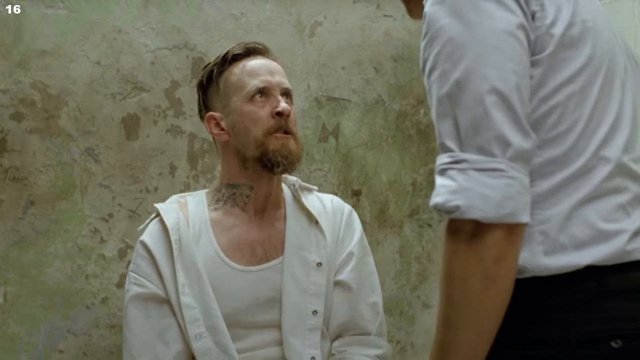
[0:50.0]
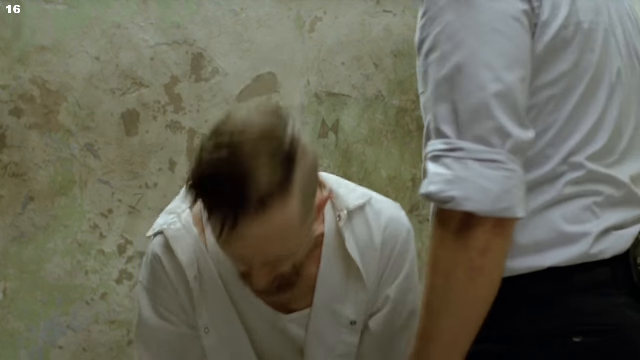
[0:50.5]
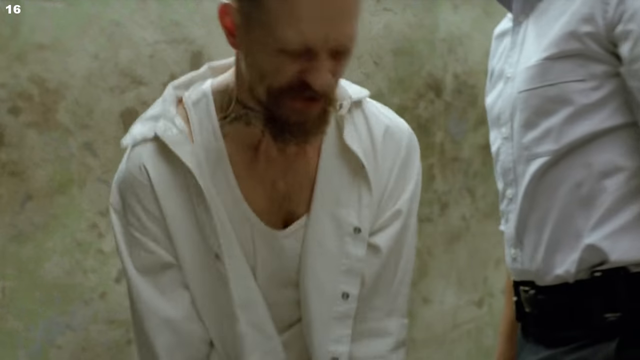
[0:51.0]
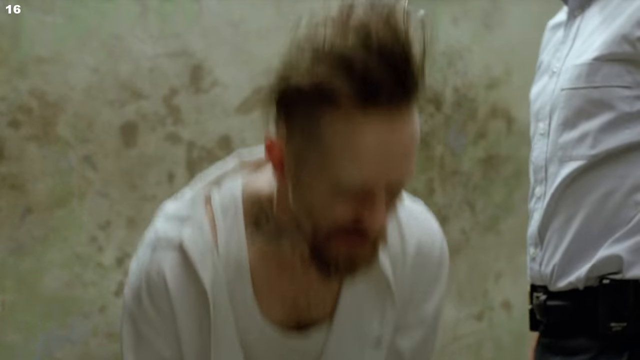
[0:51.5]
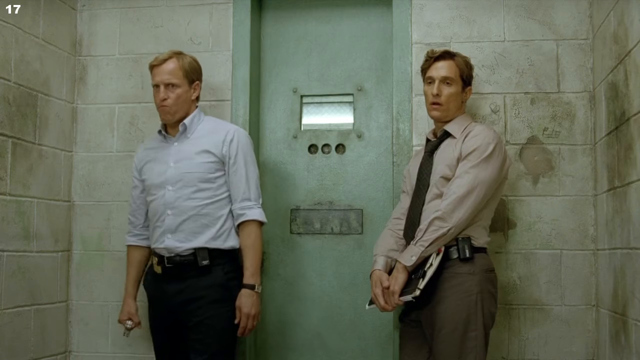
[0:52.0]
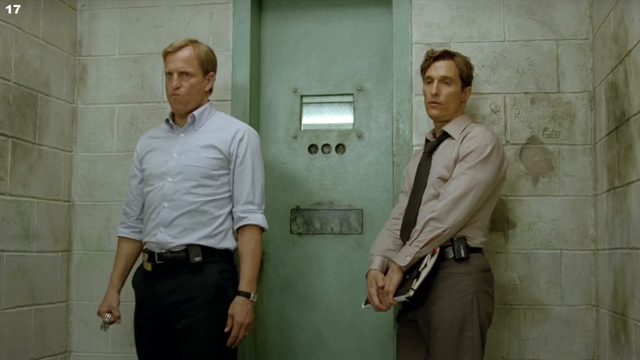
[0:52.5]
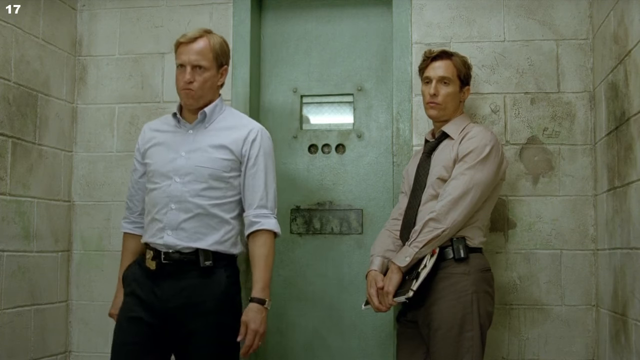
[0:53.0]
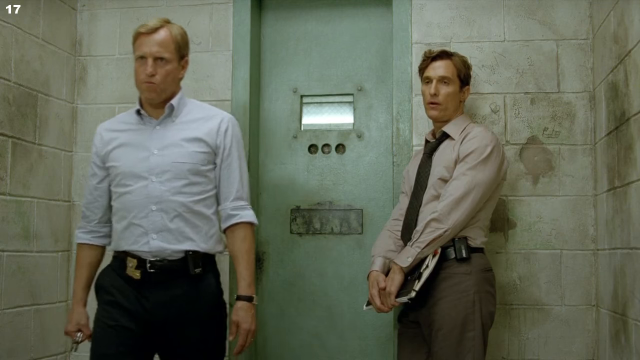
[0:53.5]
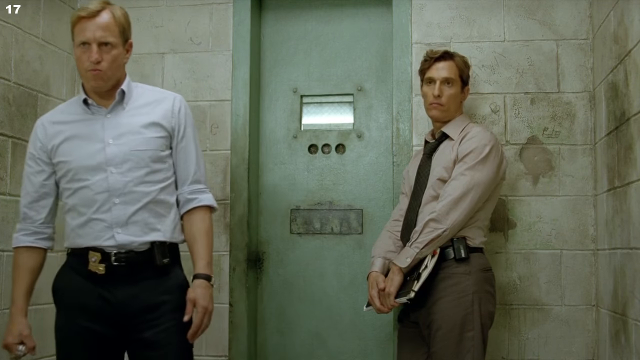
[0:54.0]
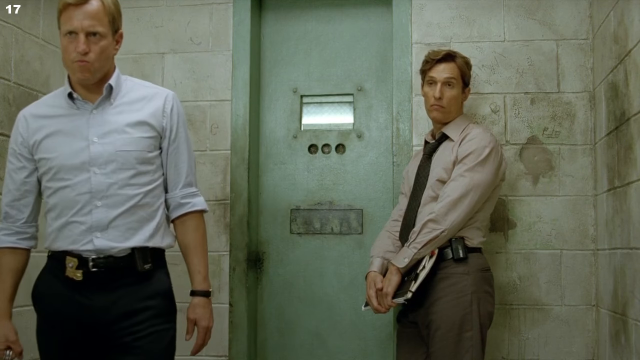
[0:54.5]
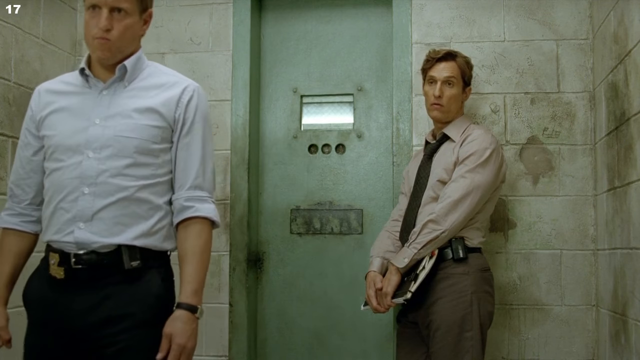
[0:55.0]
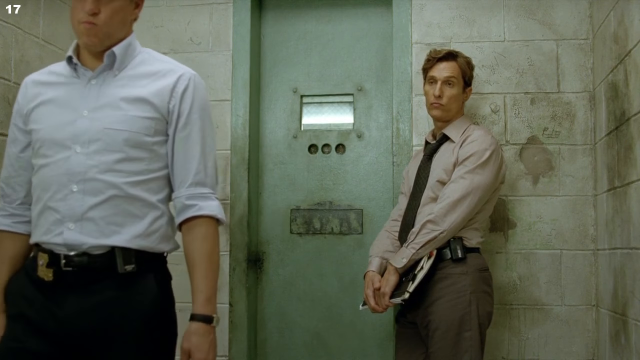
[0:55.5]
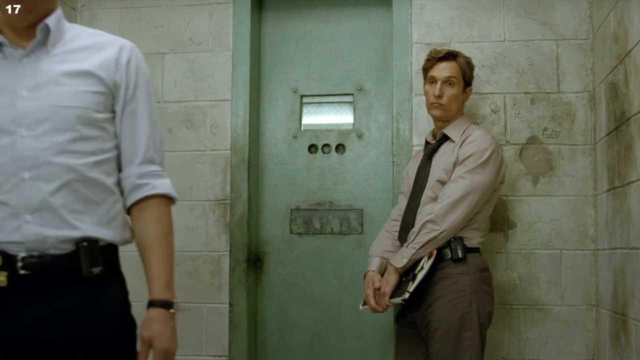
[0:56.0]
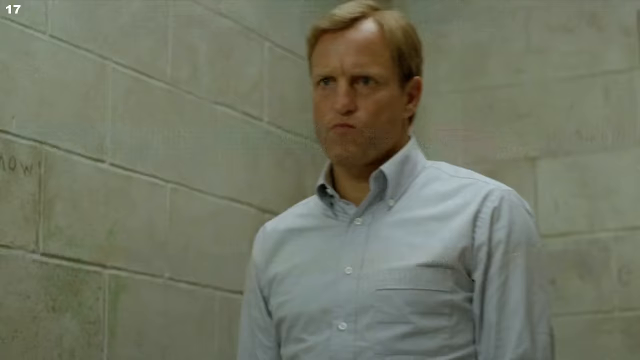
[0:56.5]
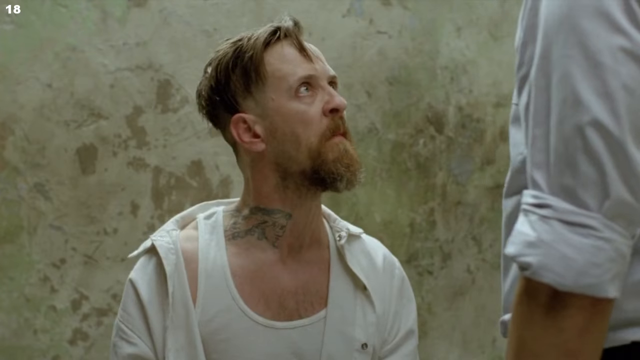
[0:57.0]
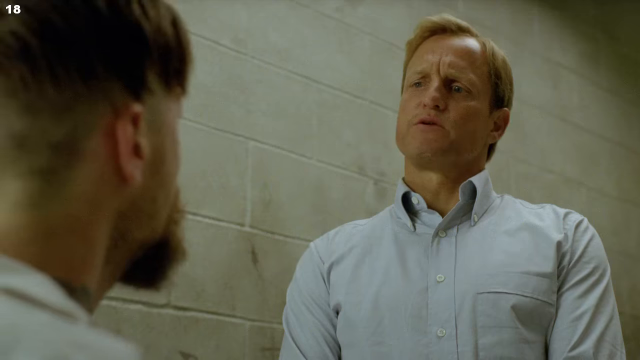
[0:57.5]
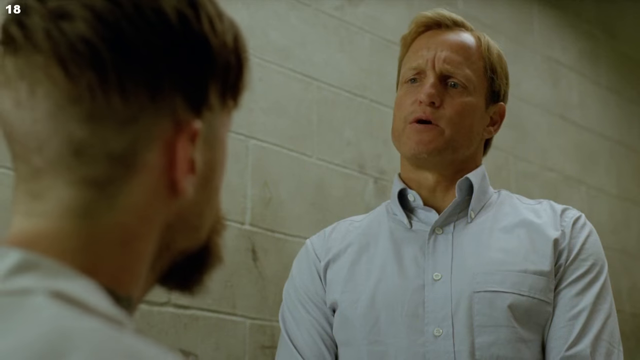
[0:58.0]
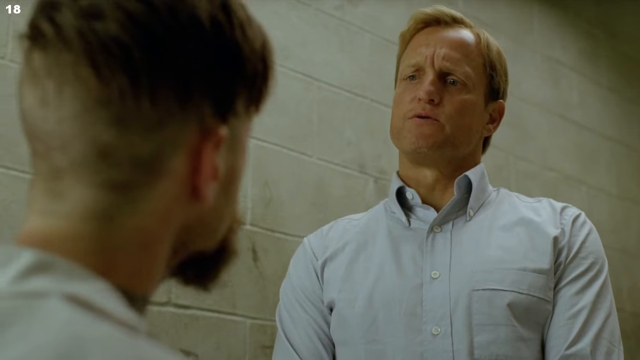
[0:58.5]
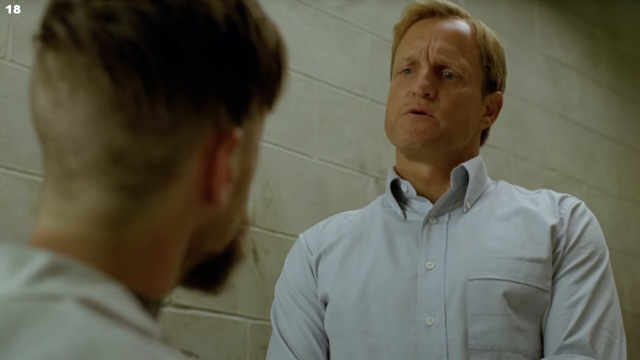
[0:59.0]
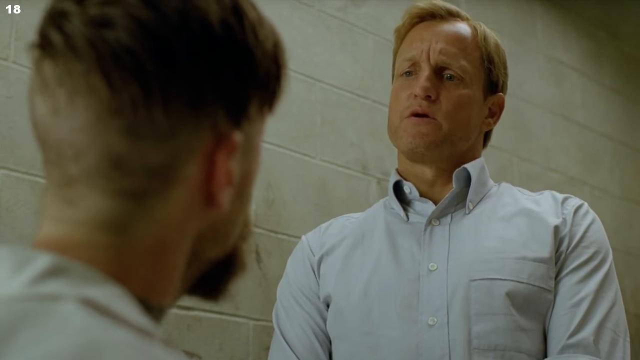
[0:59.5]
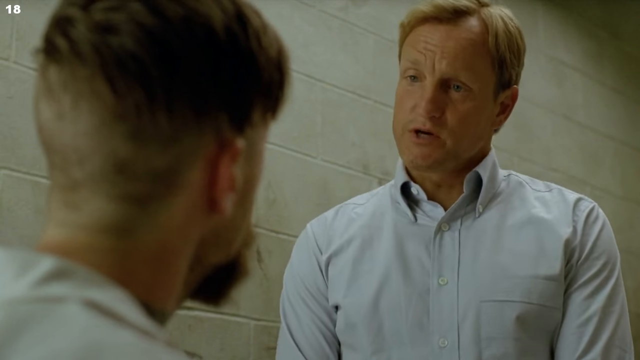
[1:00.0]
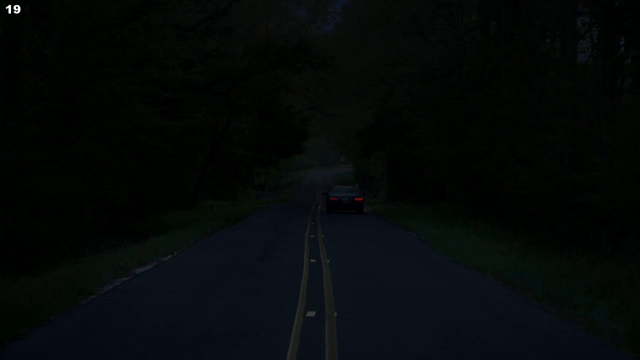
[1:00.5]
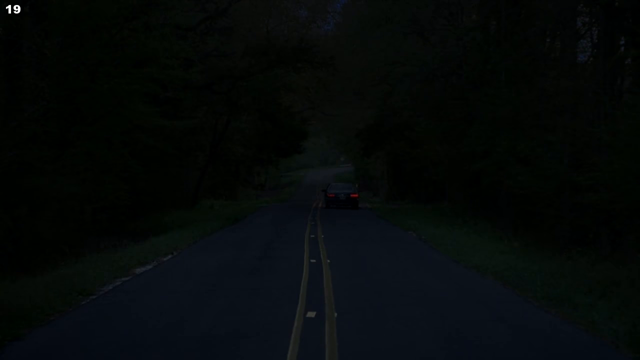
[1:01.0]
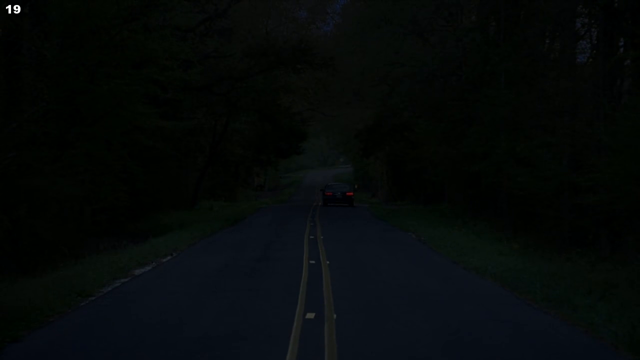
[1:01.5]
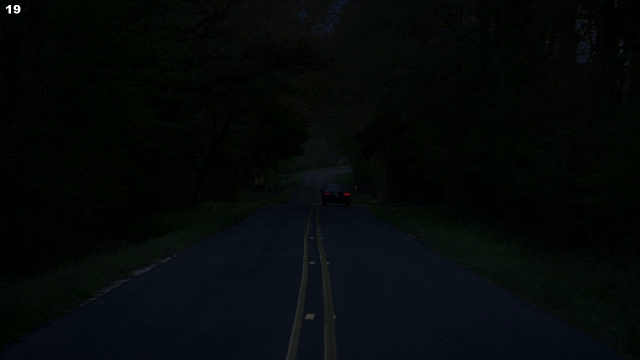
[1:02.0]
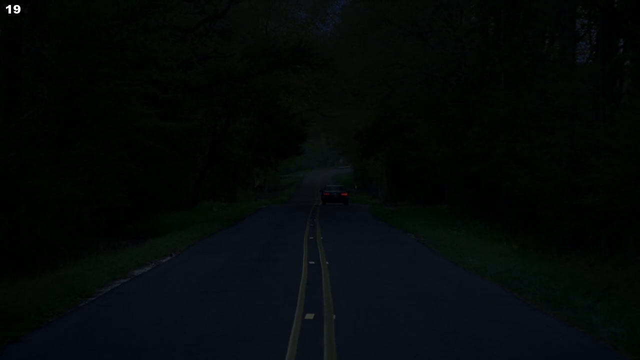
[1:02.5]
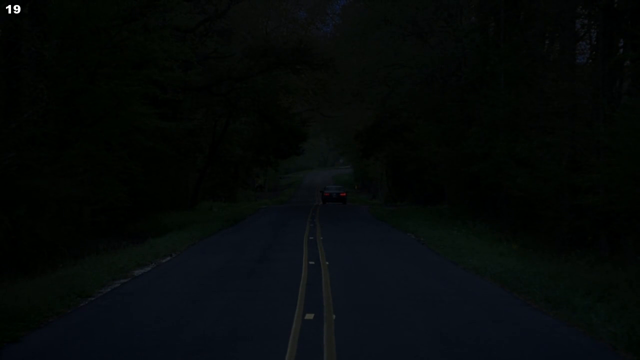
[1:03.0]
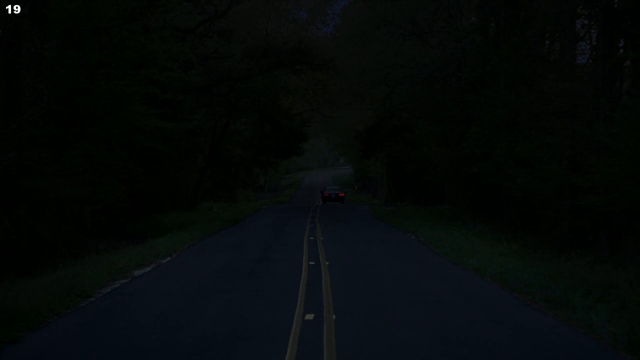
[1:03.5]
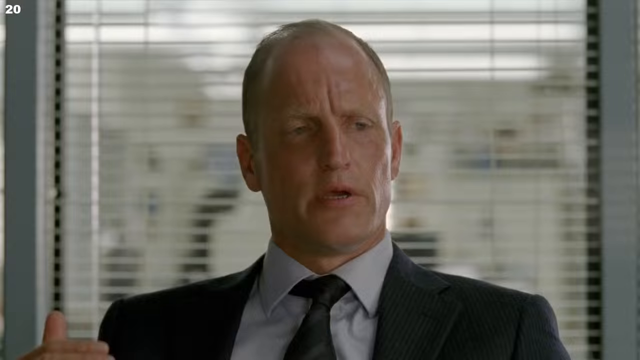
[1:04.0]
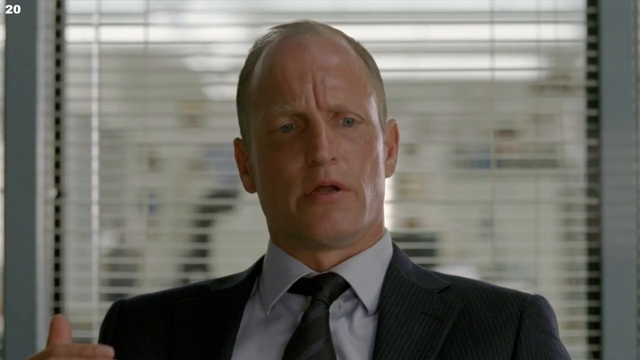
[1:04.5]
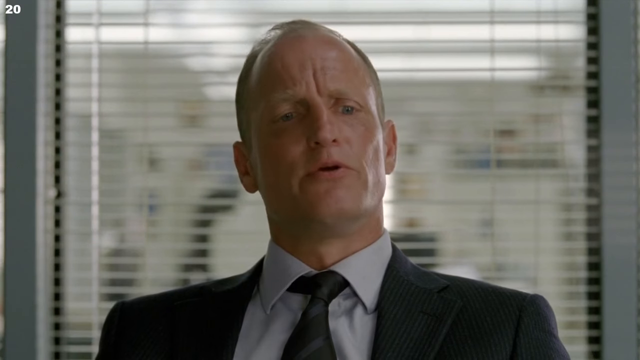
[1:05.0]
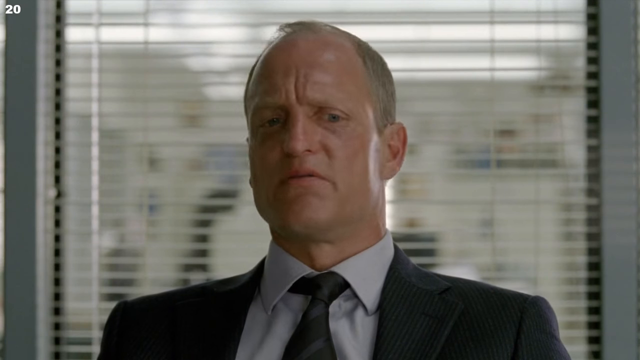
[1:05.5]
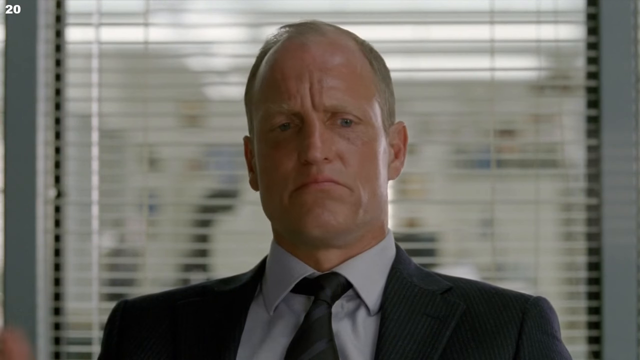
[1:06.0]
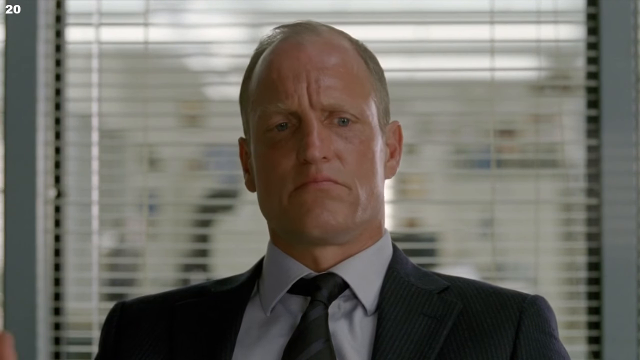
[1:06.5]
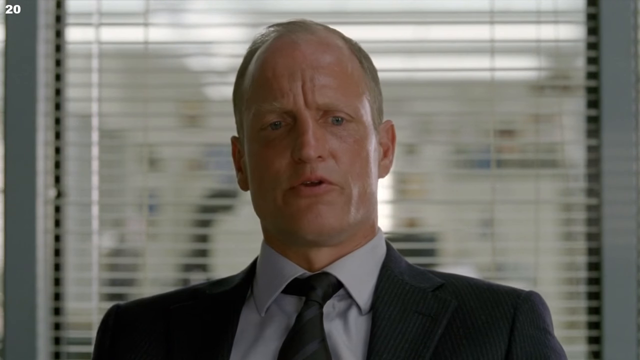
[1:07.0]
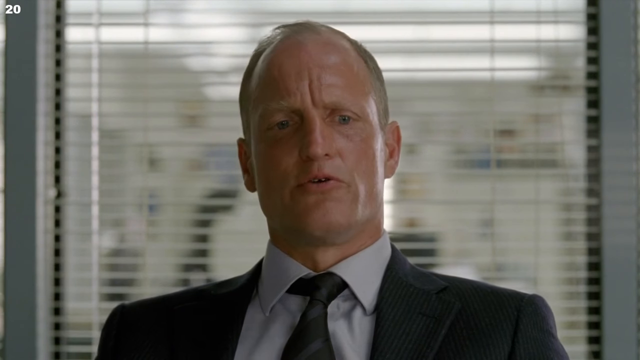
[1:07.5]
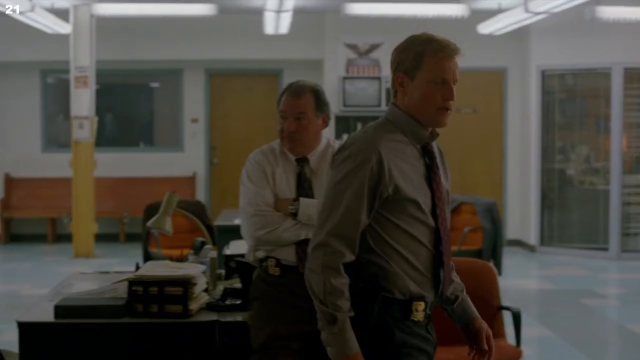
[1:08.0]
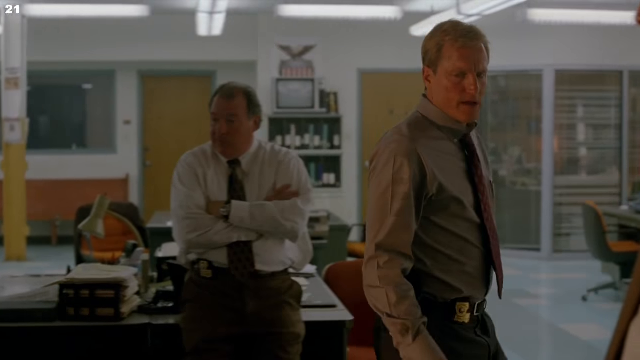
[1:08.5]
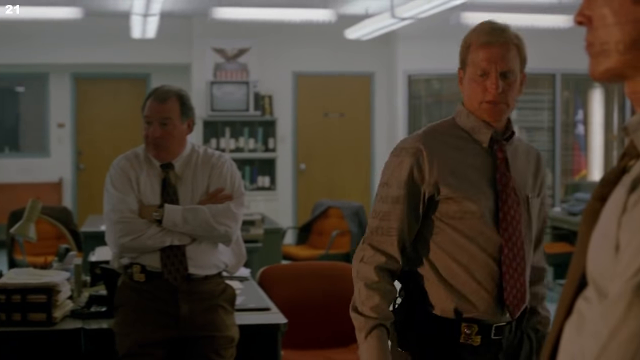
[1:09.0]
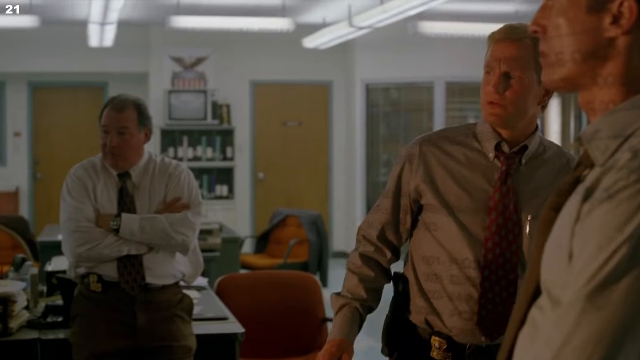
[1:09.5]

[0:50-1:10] A man in a white shirt stands up, screaming. Two policemen are in the interrogation room, making three men in the room, and they look at him in surprise as they keep arguing. In darkness, a car moves in. A white man in a black suit has a conversation with other men, maybe plotting against the prisoner. A black car travels along a long, straight, narrow road lined with big trees on the left and right, heading to an unknown location.